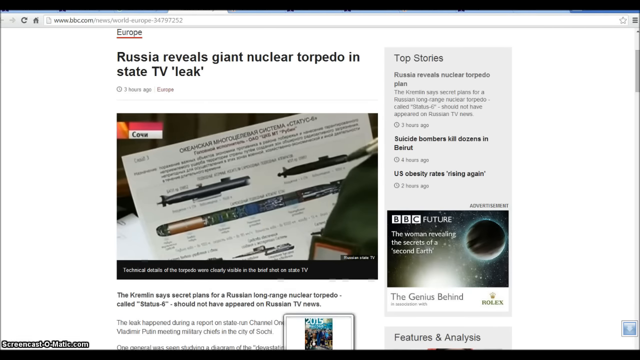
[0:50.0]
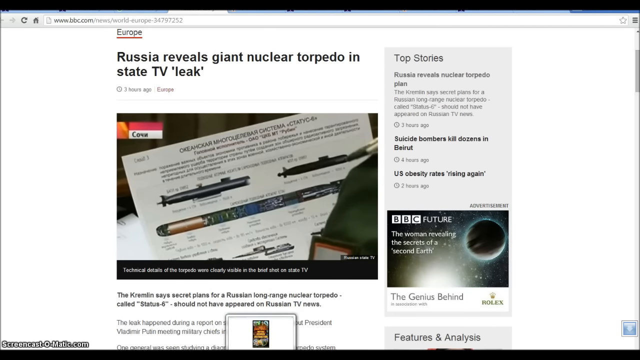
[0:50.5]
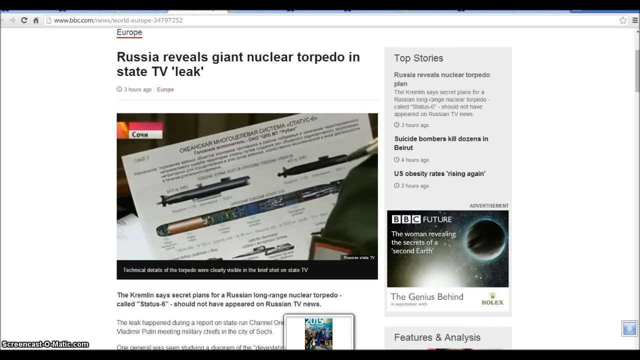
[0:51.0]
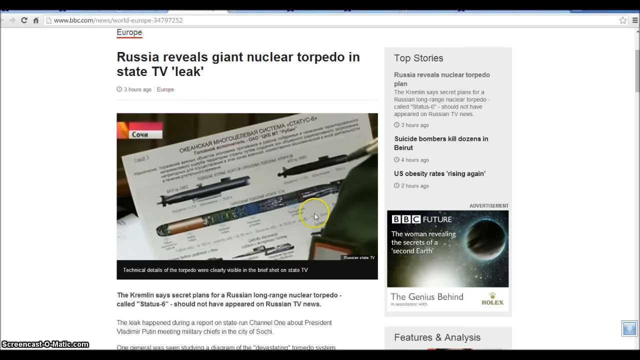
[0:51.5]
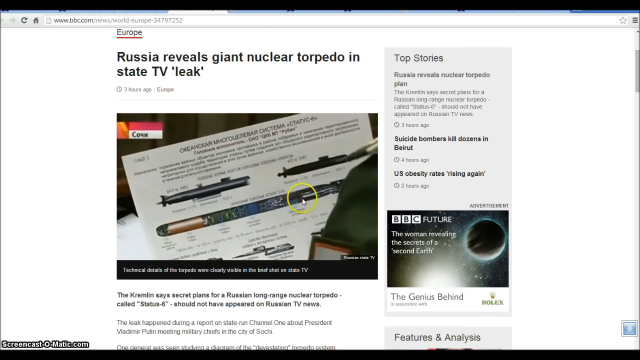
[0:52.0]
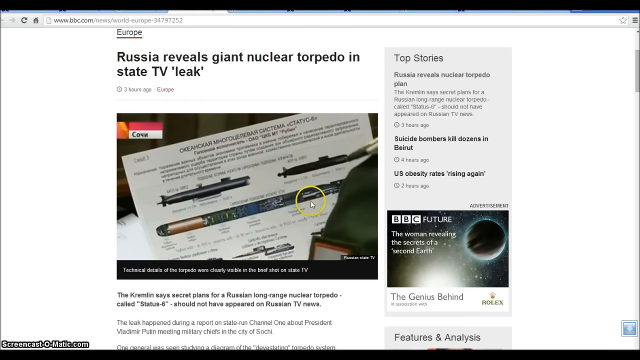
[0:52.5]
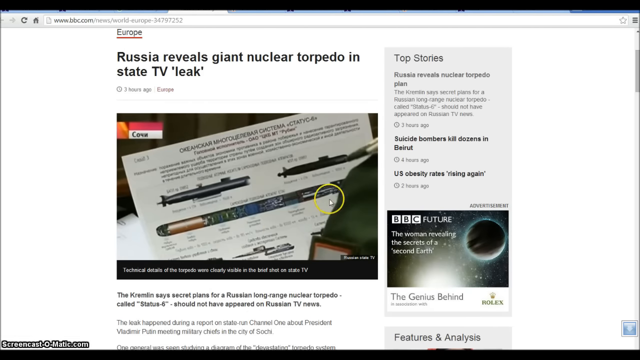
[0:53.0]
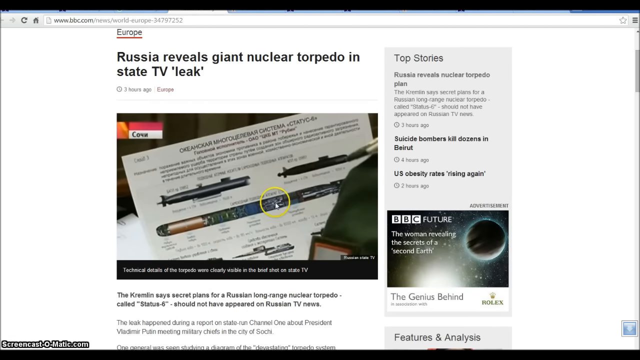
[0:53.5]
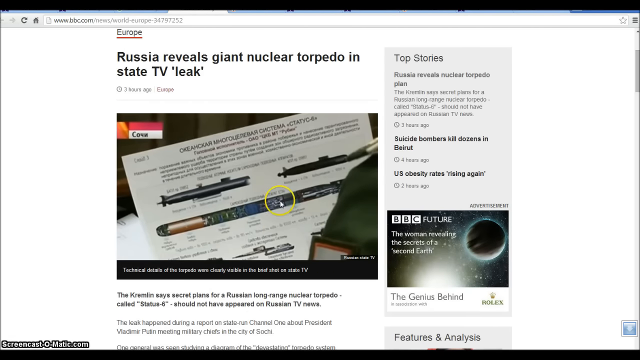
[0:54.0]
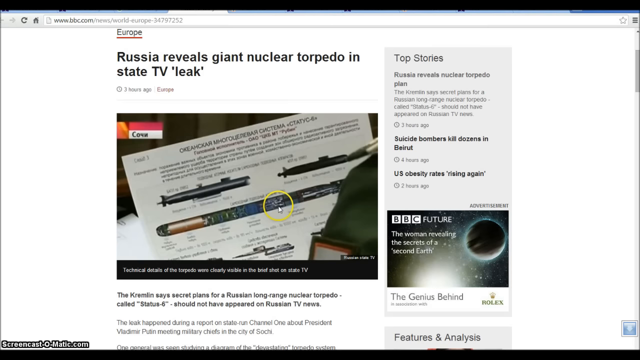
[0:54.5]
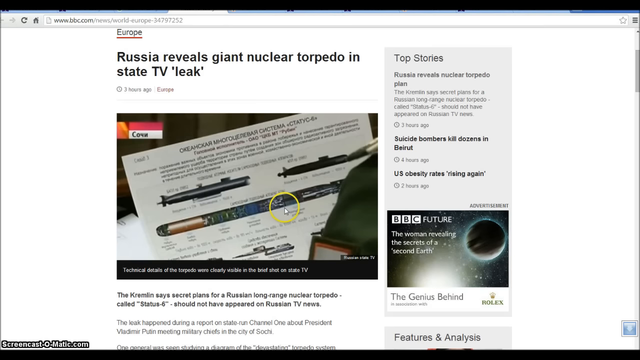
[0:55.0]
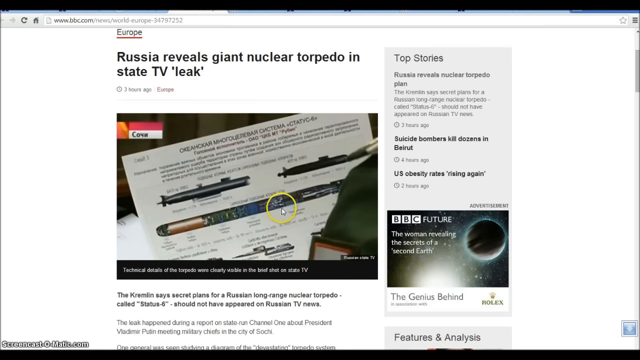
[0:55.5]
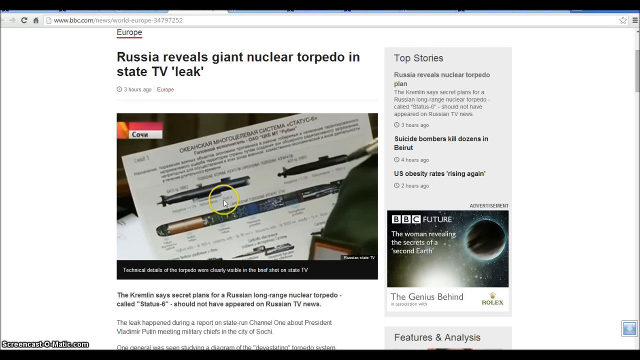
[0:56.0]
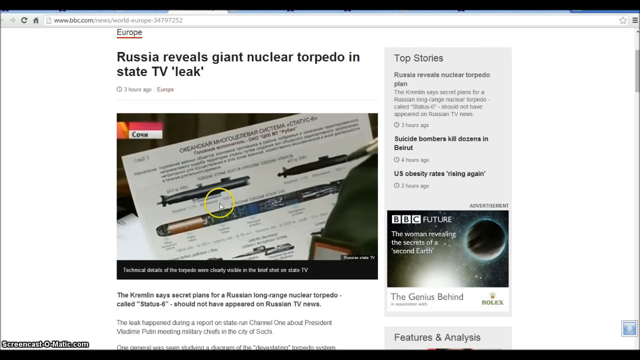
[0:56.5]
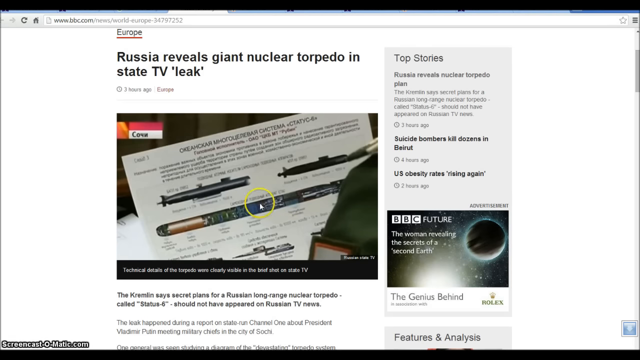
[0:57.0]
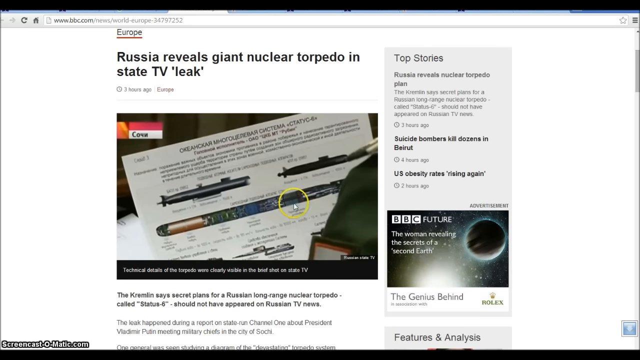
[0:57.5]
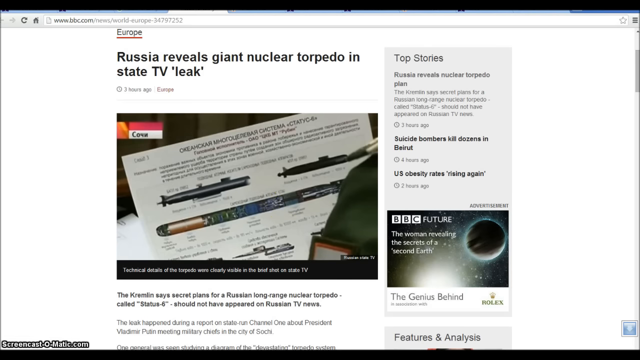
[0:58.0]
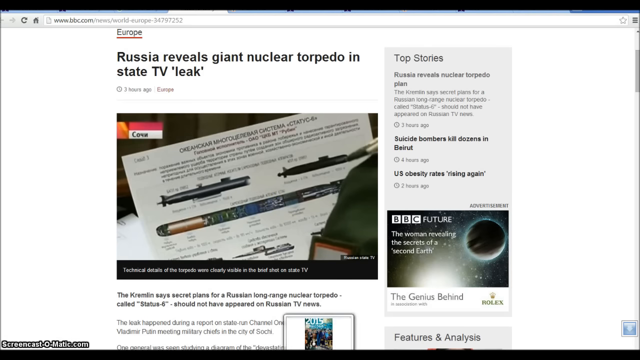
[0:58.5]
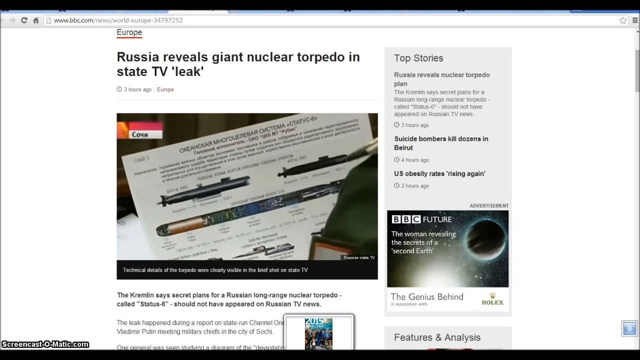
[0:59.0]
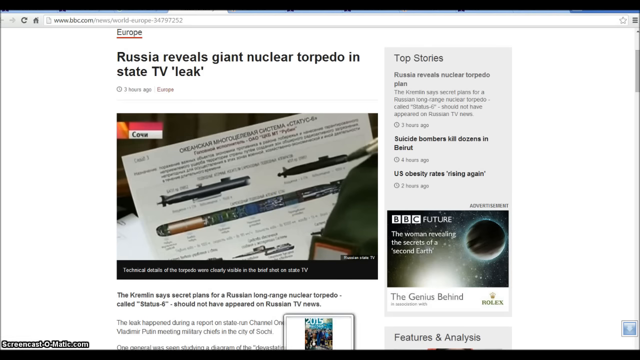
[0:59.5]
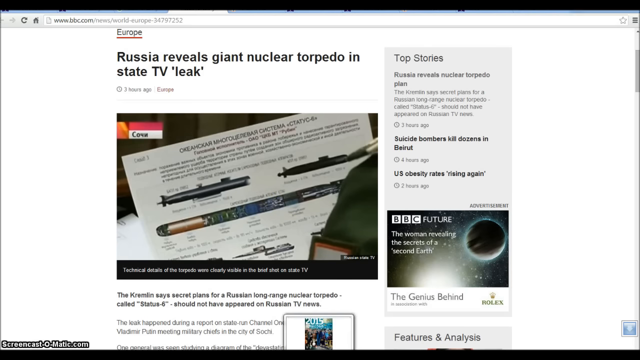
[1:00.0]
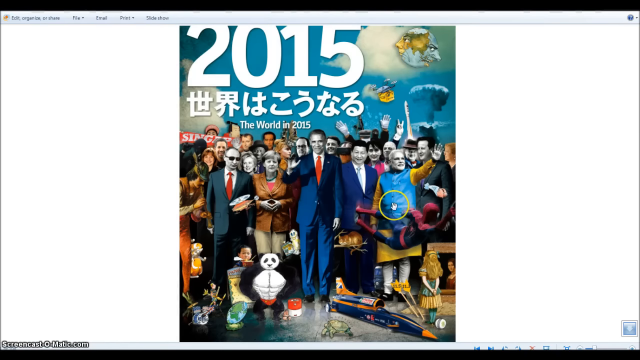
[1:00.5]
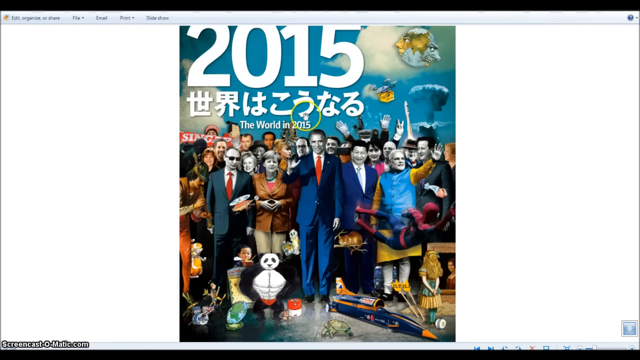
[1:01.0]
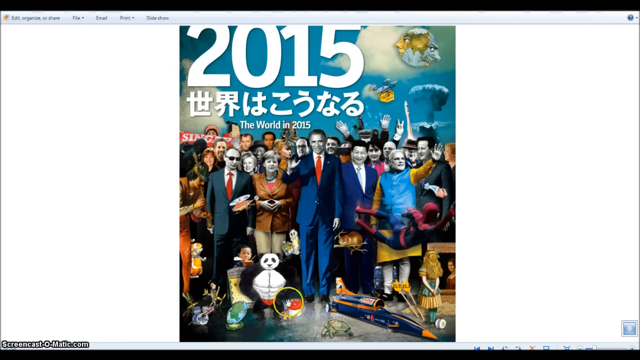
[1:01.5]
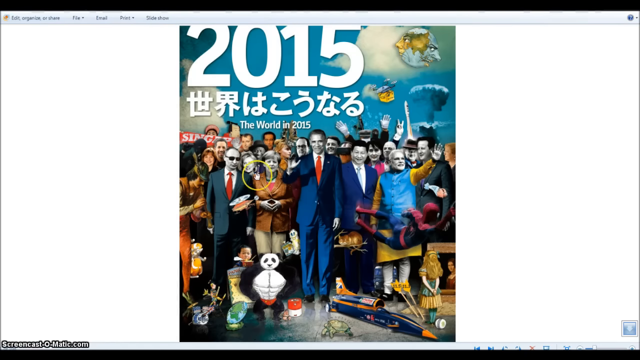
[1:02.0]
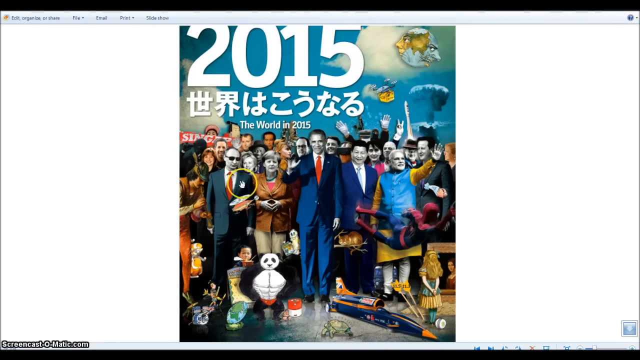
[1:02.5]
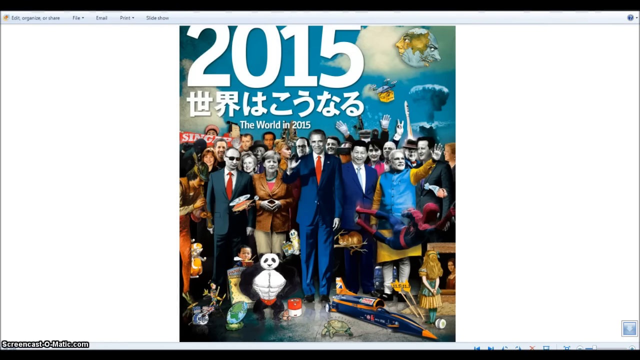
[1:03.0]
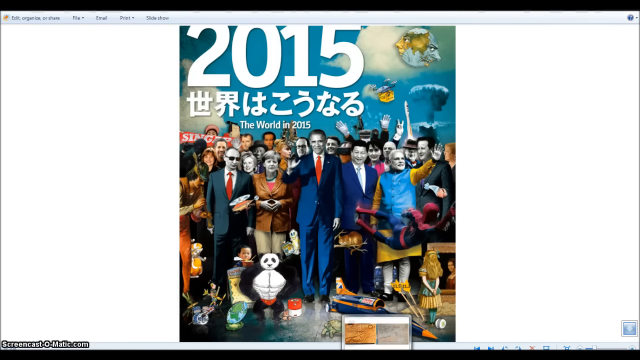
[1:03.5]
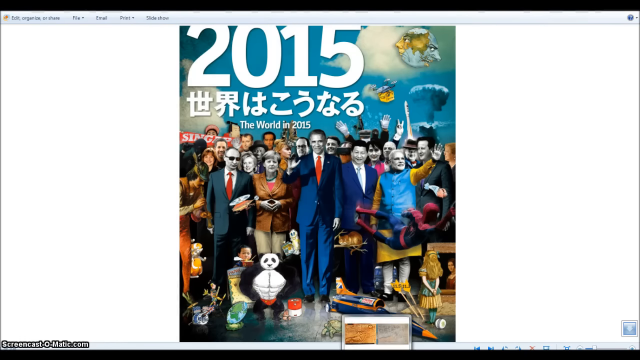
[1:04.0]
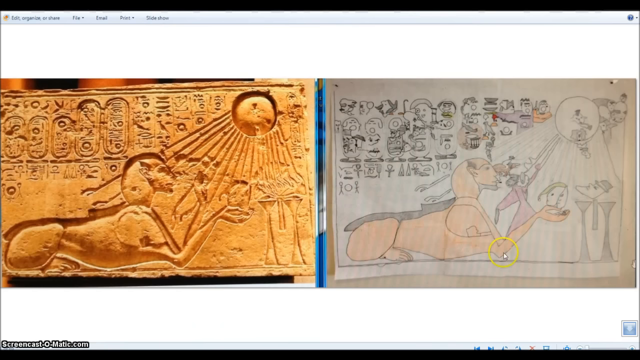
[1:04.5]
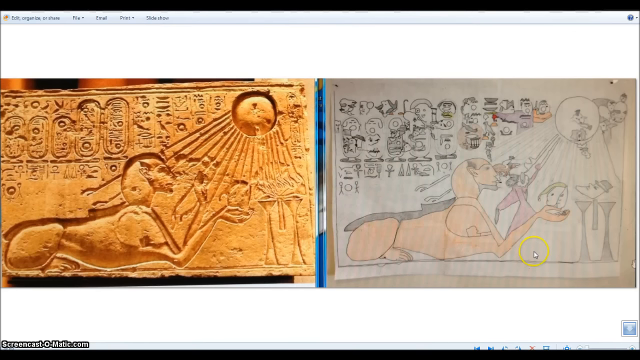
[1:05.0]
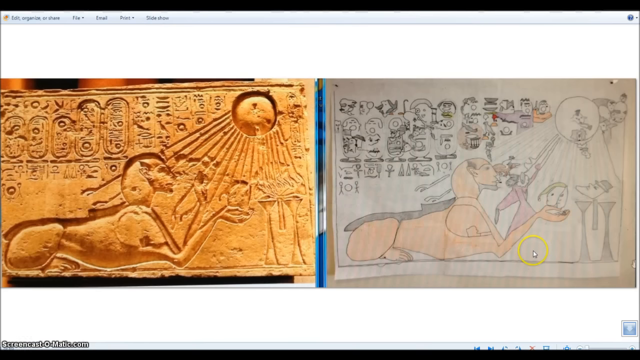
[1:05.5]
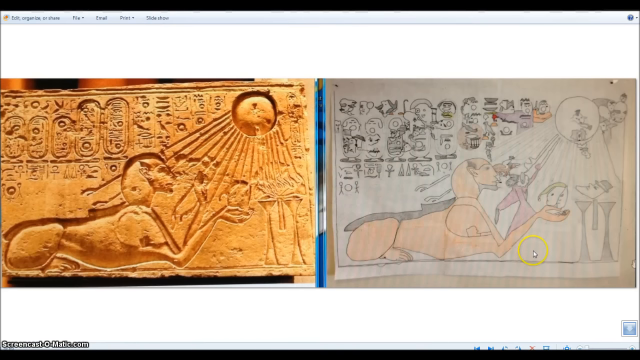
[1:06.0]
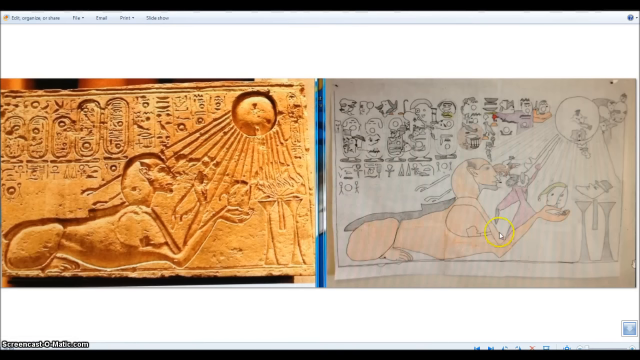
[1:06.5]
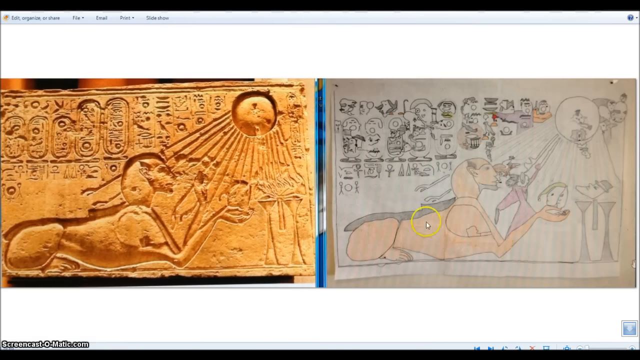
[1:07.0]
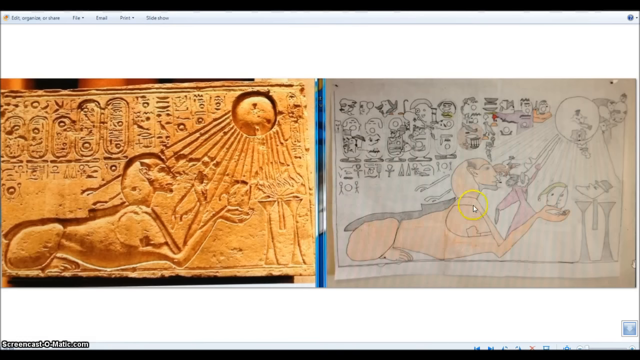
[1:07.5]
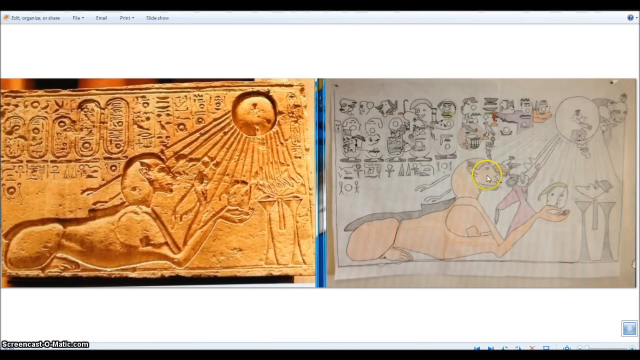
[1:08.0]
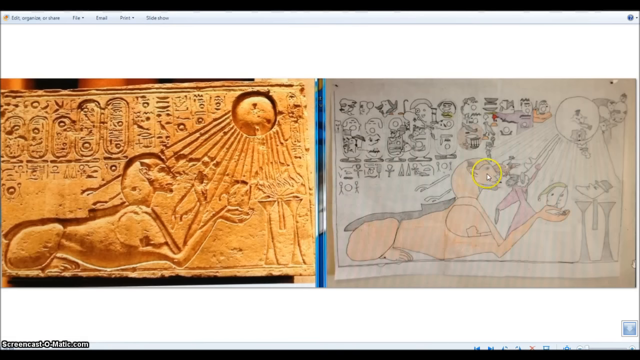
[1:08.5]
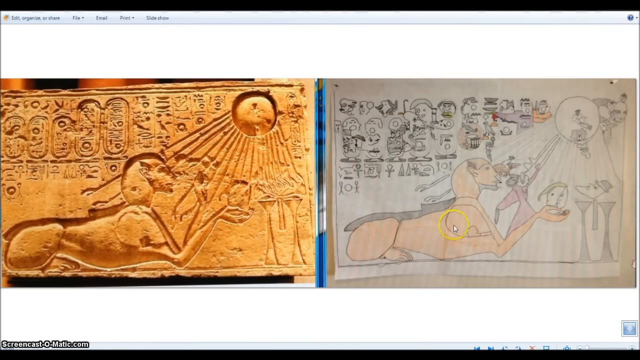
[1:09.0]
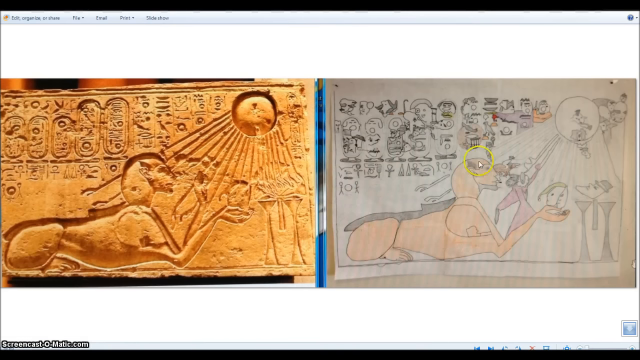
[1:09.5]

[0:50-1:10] The Russian nuclear torpedo article is still on screen, with the yellow circle moving up and down. The view returns to the picture of the world in 2015, and then shows Egyptian drawings, with an ordinary drawing on paper on the left-hand side. The cursor moves around and the circle is placed on the head of each figure shown; where there are people, it moves over their heads.